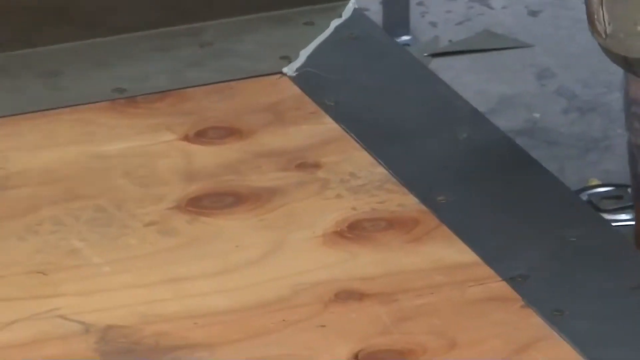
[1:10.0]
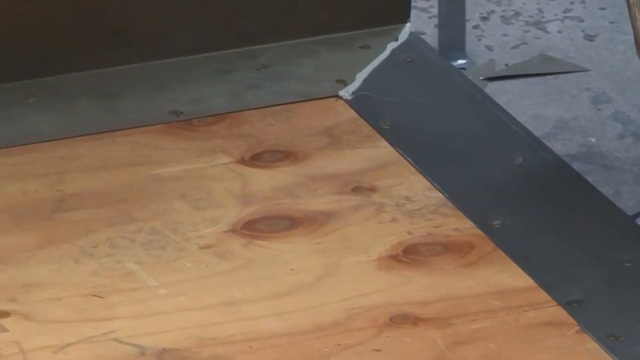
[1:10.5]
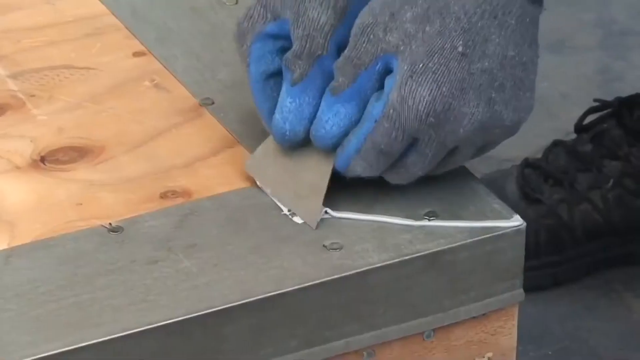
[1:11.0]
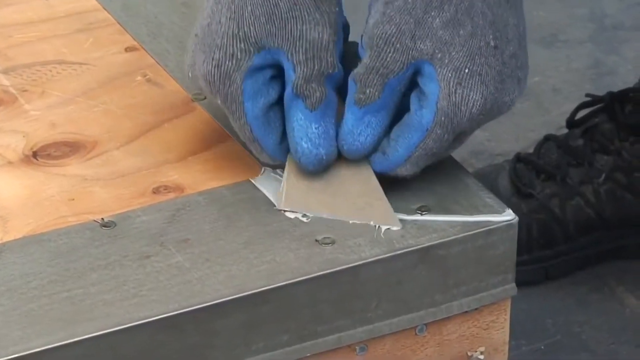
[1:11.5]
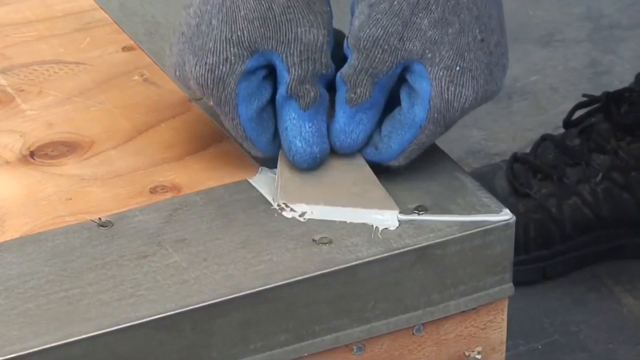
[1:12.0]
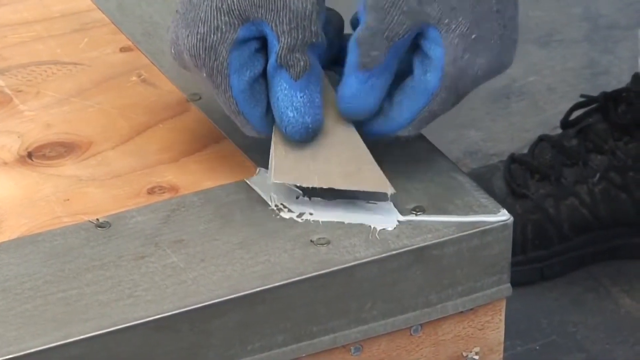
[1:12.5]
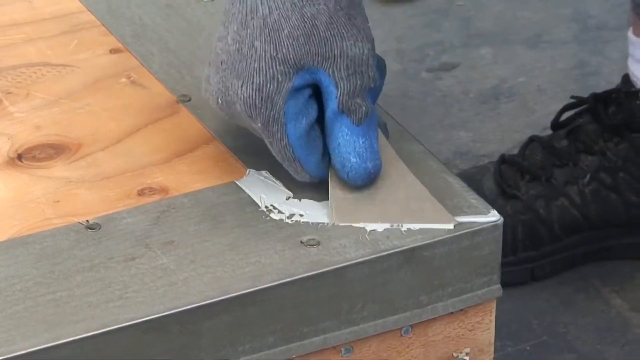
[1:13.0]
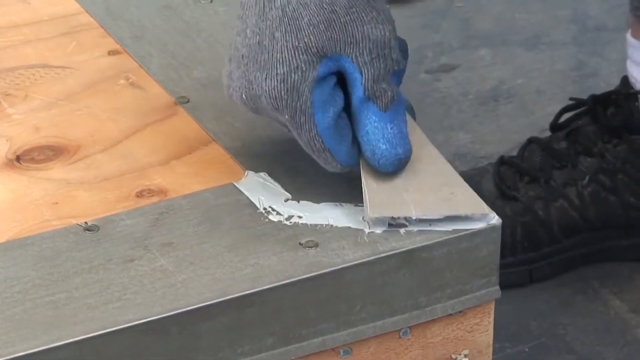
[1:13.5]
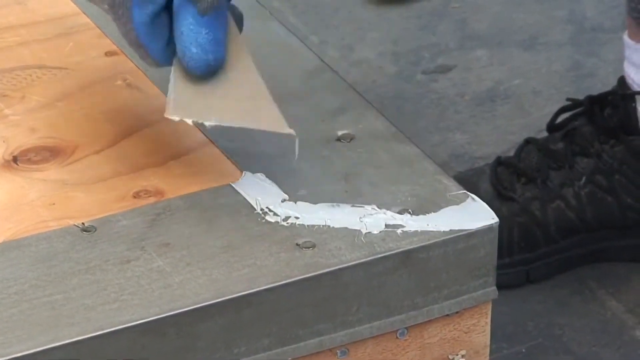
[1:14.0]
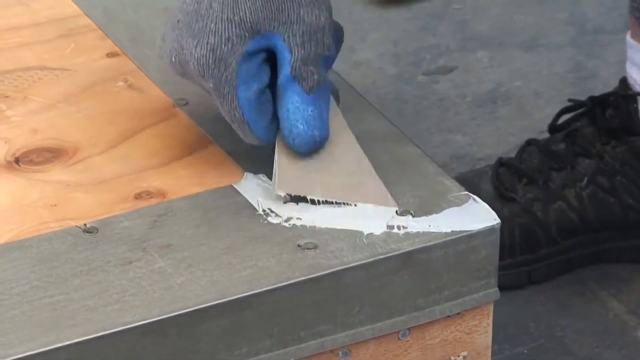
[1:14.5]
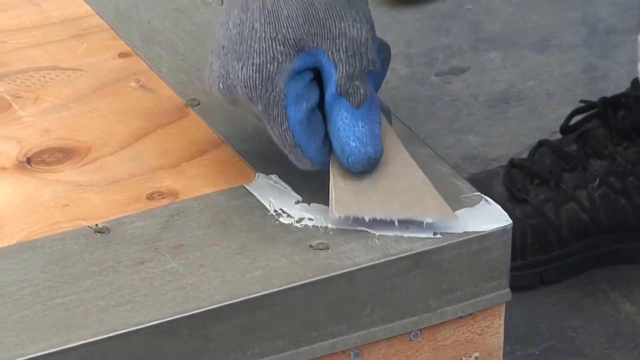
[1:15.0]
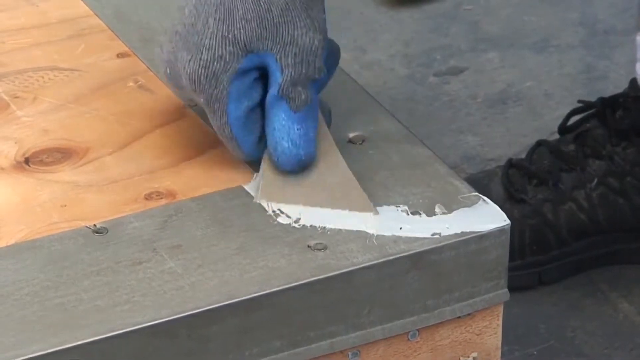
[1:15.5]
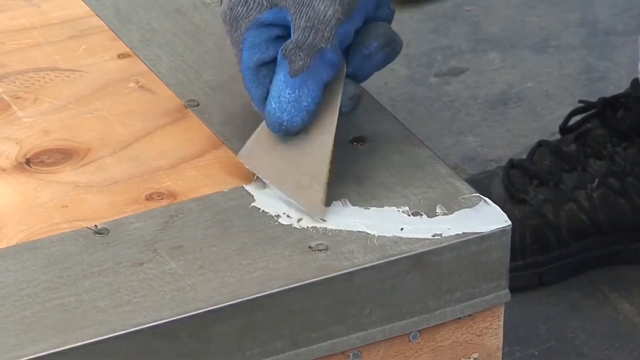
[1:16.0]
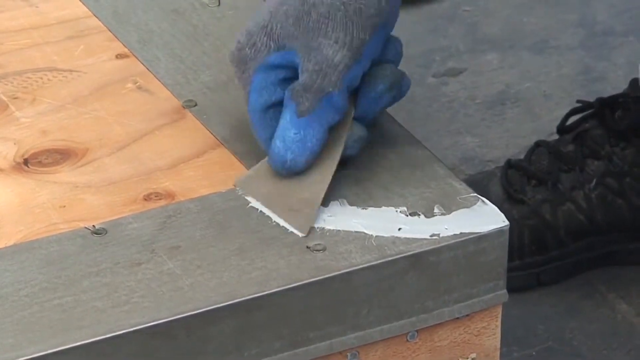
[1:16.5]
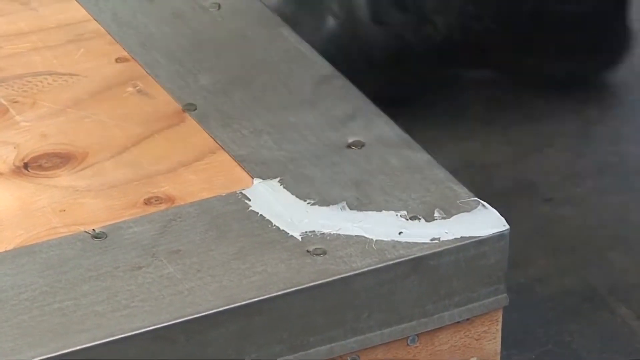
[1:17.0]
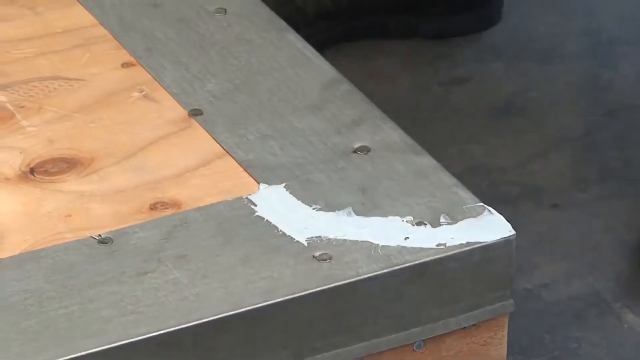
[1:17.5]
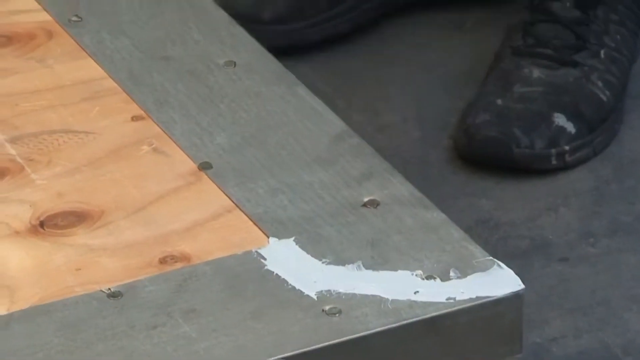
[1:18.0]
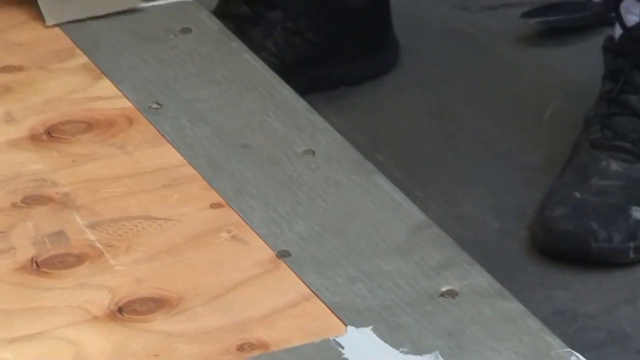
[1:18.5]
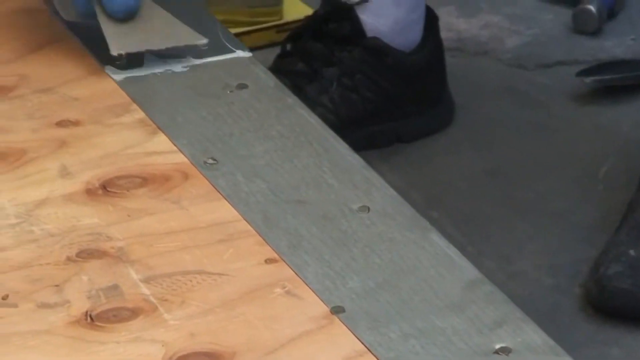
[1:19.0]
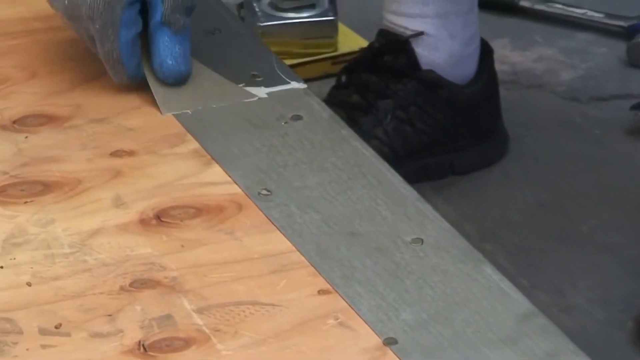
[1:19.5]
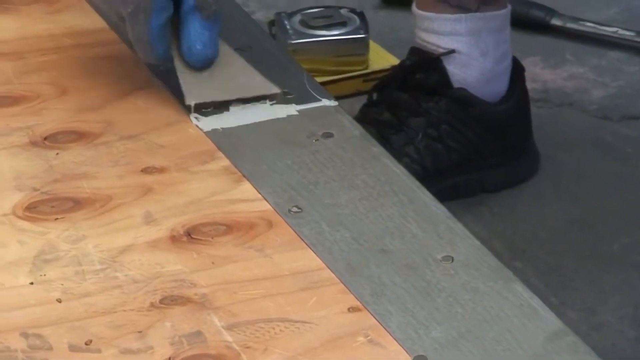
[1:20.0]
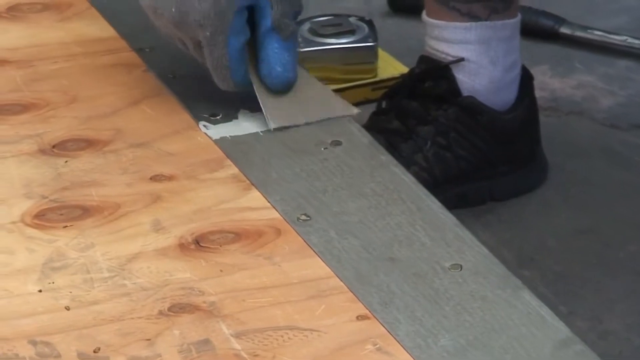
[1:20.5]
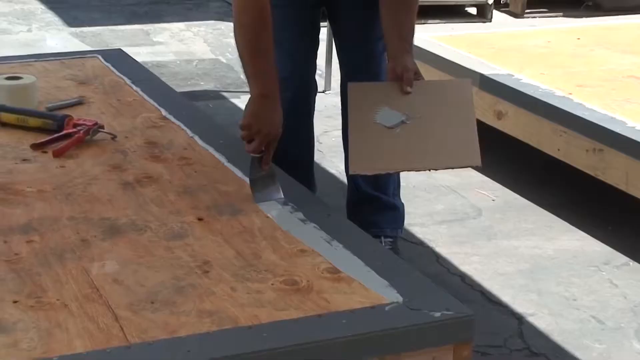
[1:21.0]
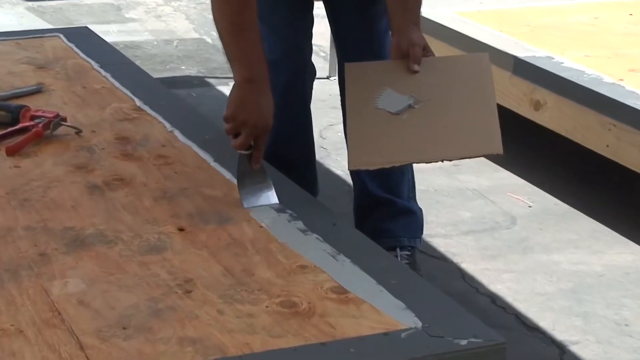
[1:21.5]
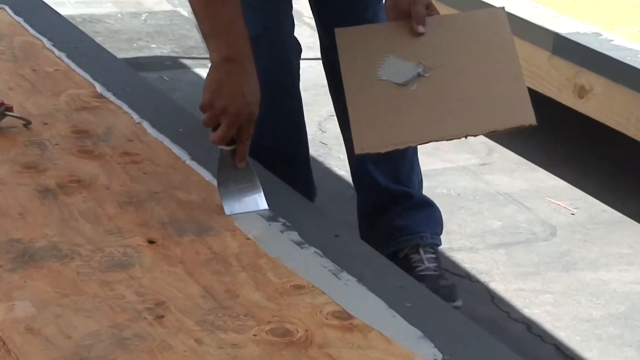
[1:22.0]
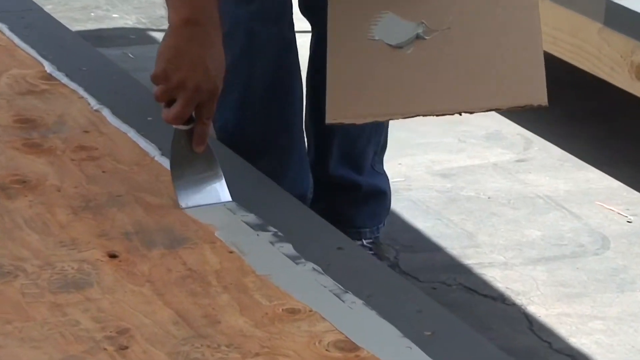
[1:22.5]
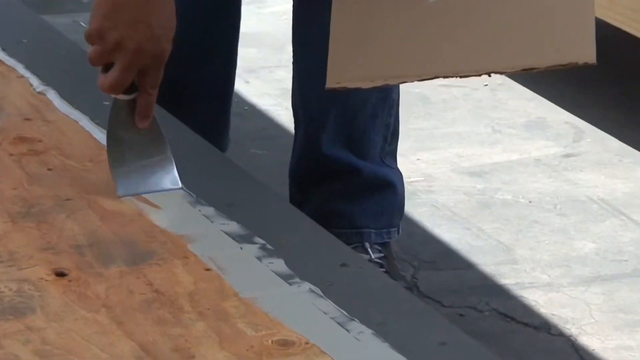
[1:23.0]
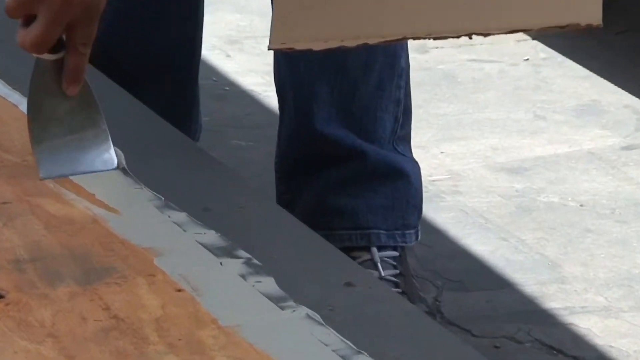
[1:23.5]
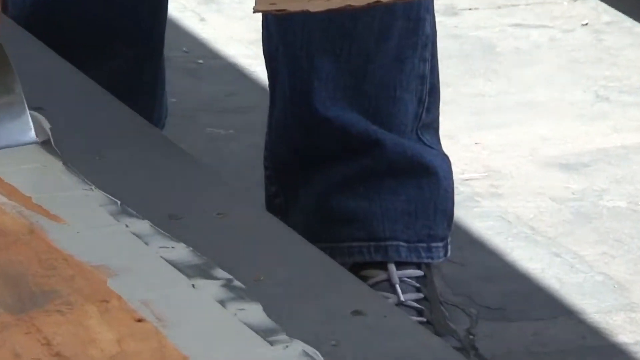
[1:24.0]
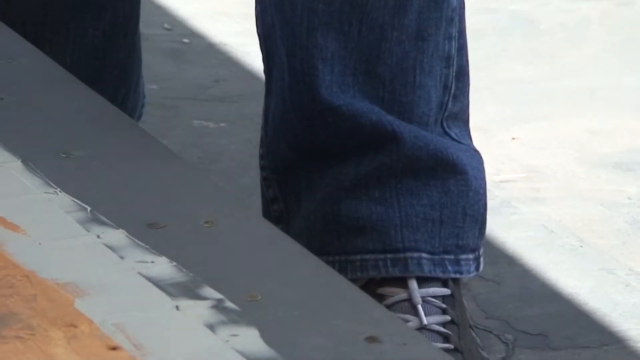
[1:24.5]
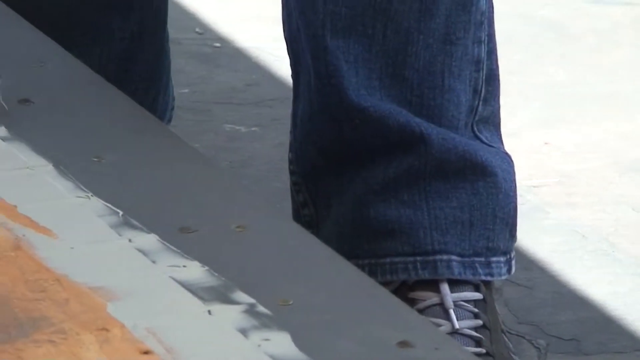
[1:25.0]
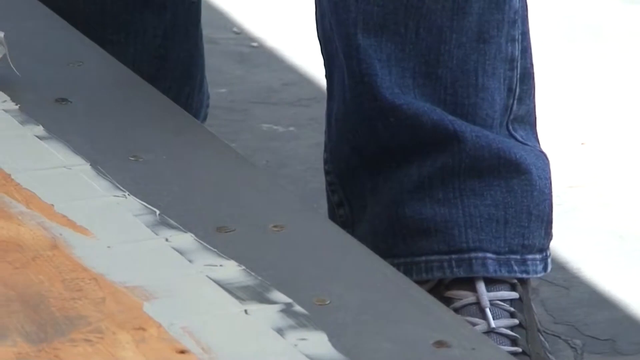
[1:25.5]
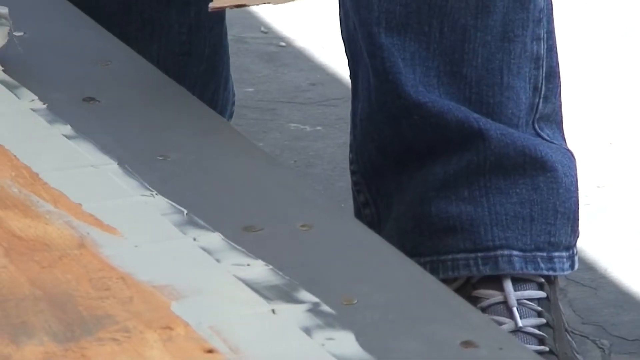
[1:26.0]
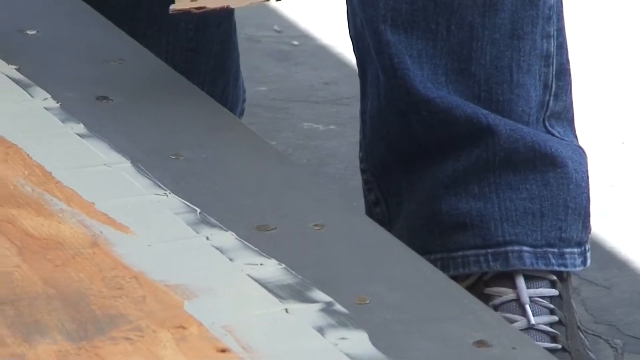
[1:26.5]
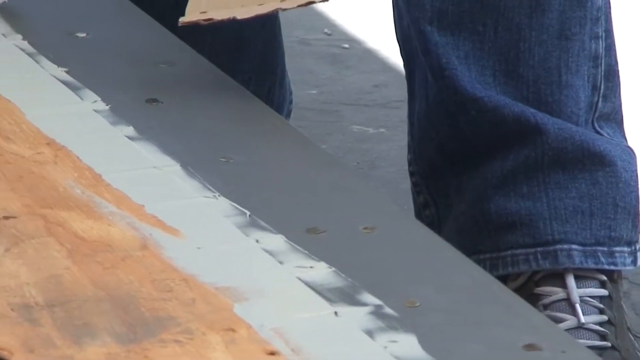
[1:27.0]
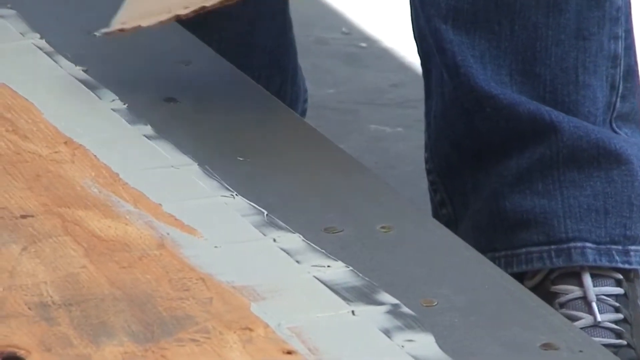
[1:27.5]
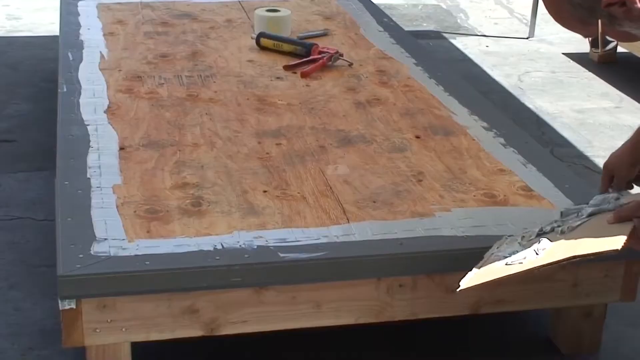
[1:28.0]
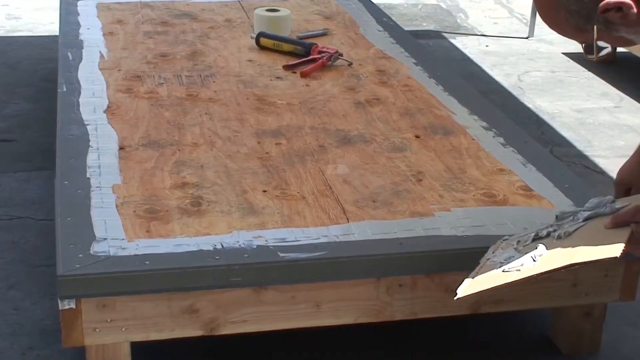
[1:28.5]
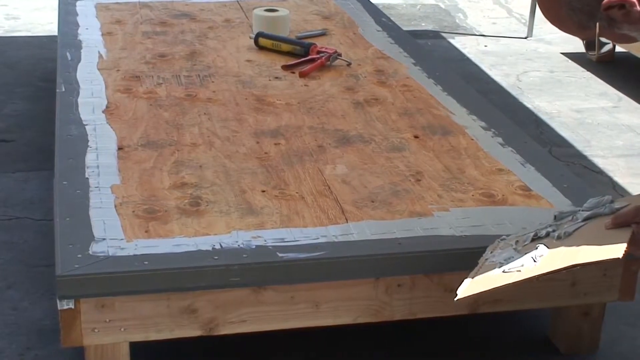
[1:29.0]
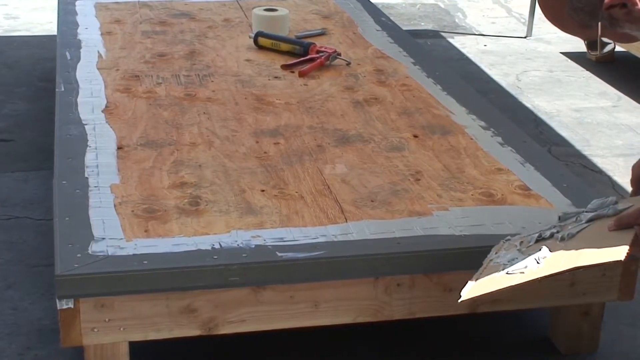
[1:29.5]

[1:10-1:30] A zoomed-in shot shows the front right-hand corner of the decking and its covering, which is being spread with a spreader. Glue he put on earlier is on the surface, and he spreads this glue or sticky substance onto the line where the join is. The nail holes and nails are visible, with about five nail holes for that corner as well as around the edges. The camera pans upward along the right-hand side of the decking, and he spreads the adhesive along the central join as well. The shot cuts to a larger piece of decking and the corner piece, where the person, wearing jeans, uses the spreader along the edges where the fascia meets the surface of the decking, in a long continuous line around the edge of the join. He holds a piece of cardboard with some adhesive on it in his left hand. A wider view shows three of the edges of the surface as he spreads the adhesive in the right-hand corner of the decking. In the background are a syringe and a roll of tape or PTFE.